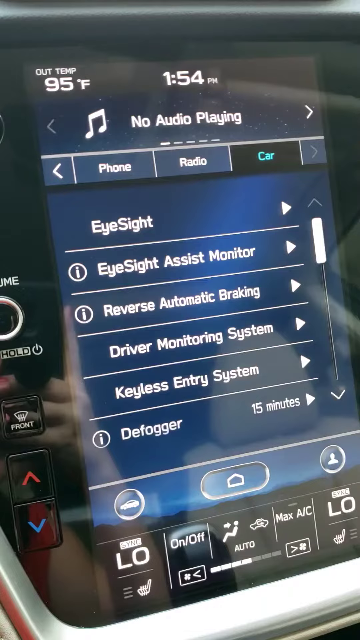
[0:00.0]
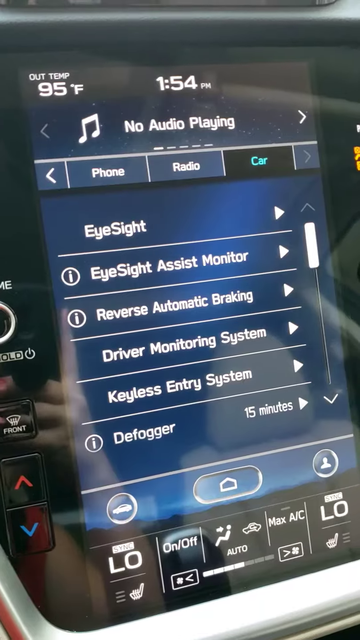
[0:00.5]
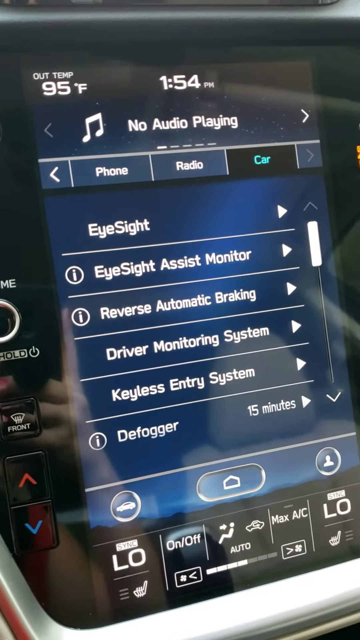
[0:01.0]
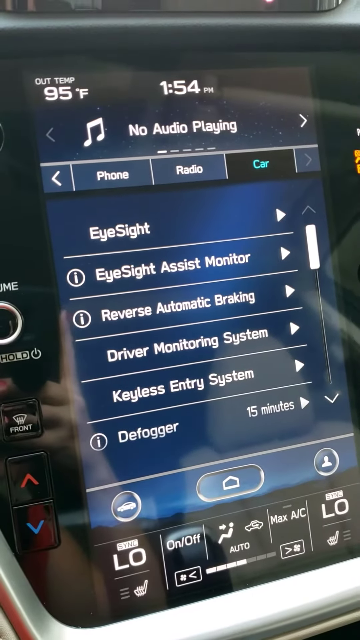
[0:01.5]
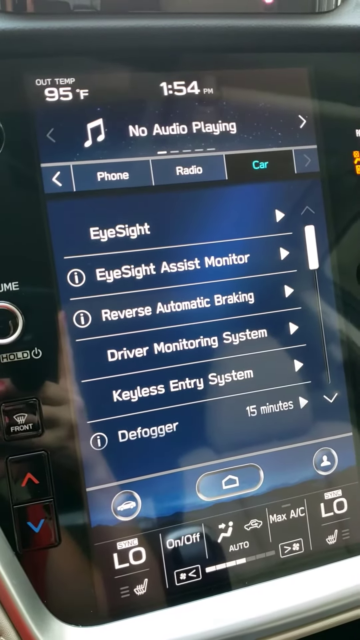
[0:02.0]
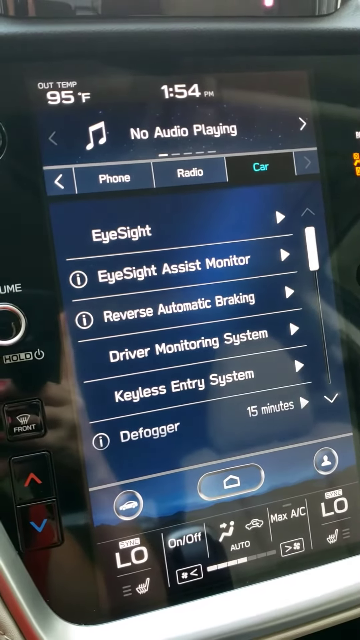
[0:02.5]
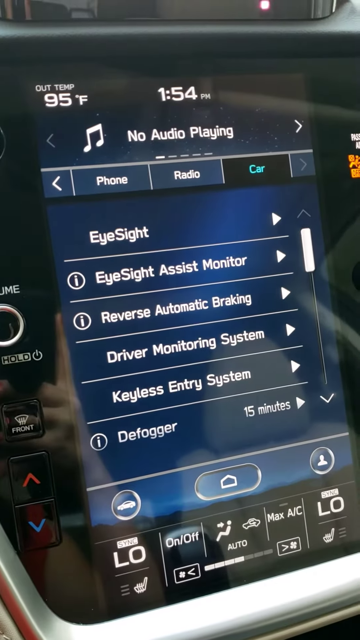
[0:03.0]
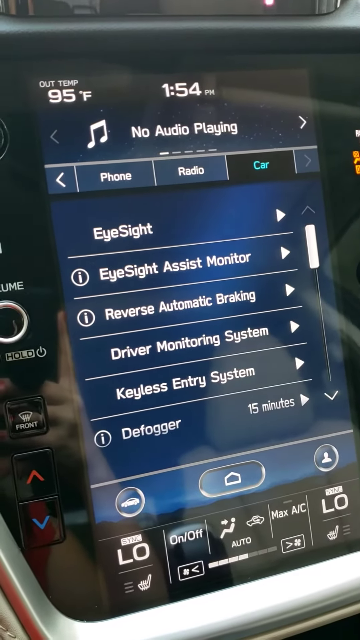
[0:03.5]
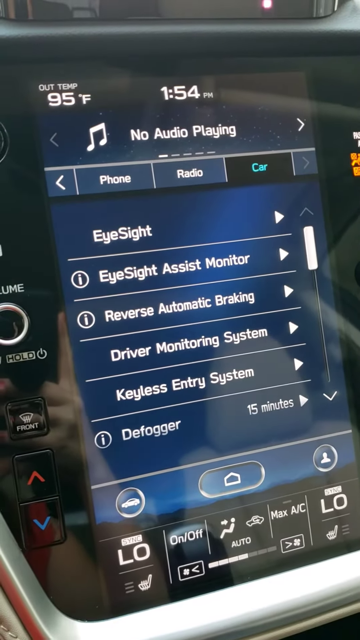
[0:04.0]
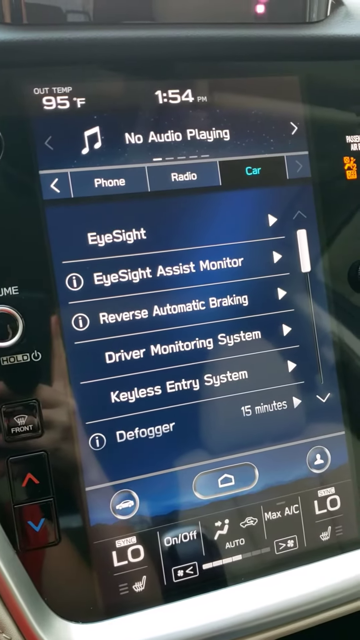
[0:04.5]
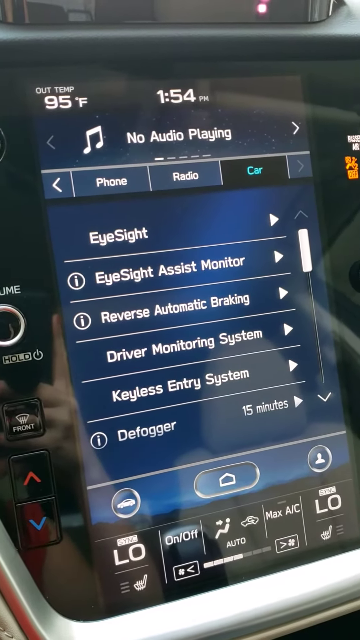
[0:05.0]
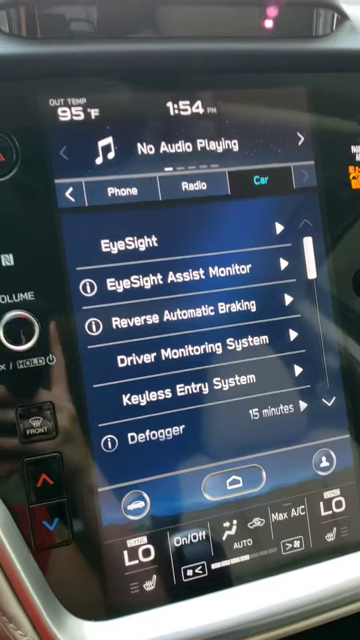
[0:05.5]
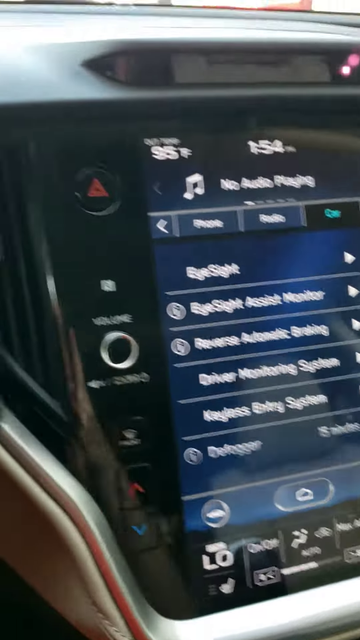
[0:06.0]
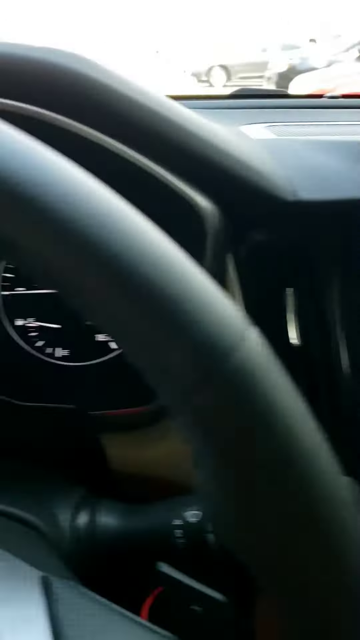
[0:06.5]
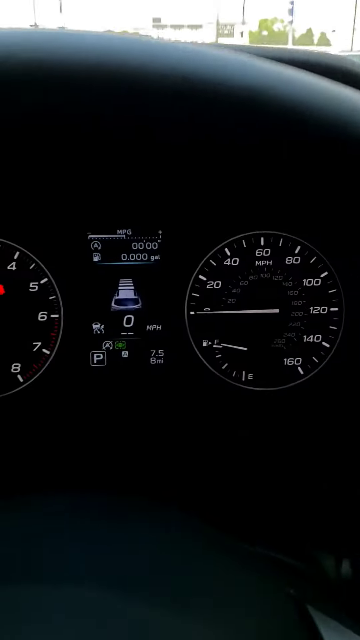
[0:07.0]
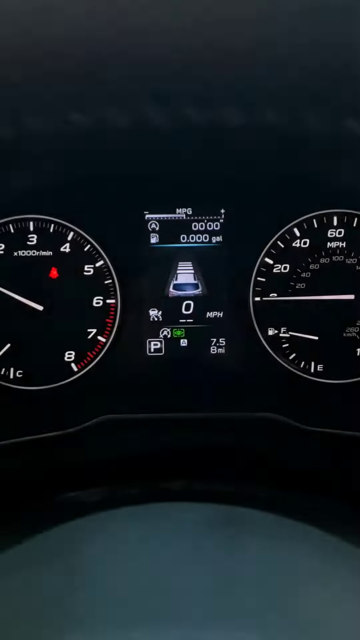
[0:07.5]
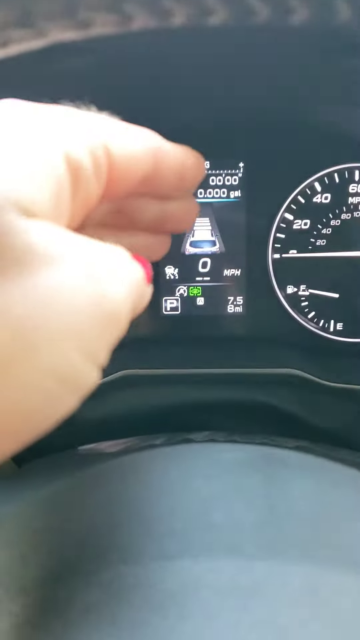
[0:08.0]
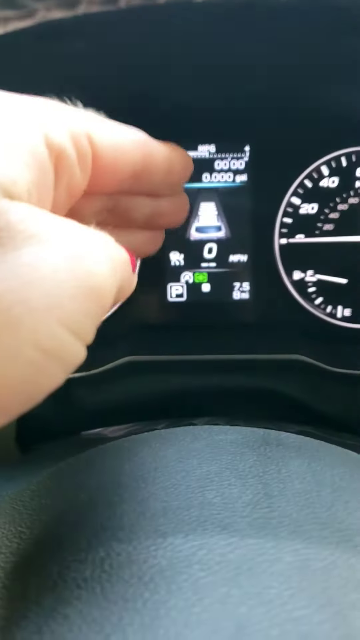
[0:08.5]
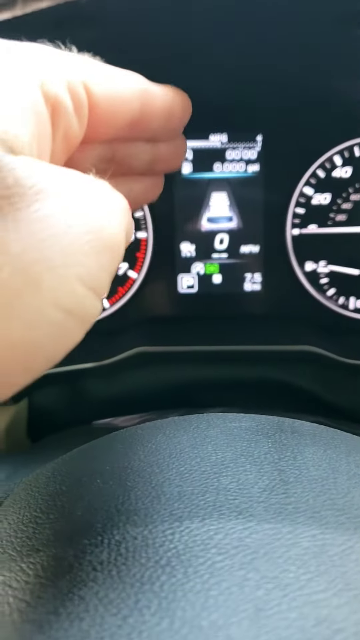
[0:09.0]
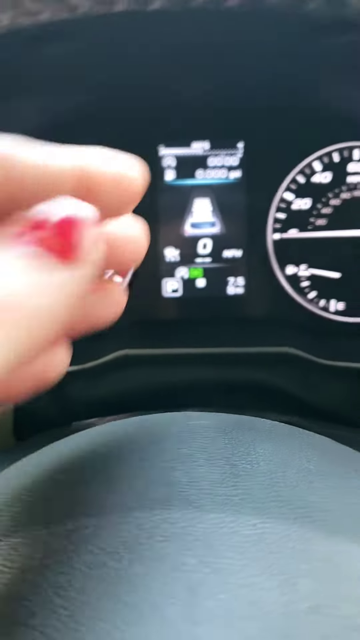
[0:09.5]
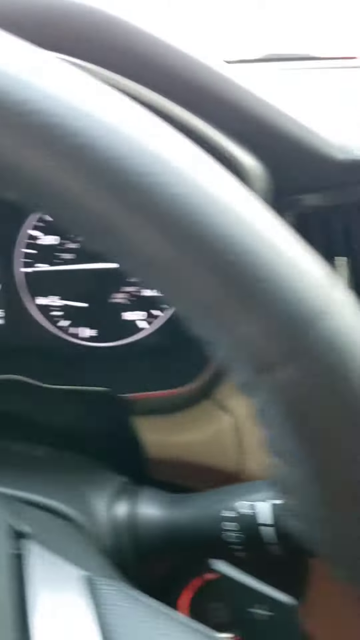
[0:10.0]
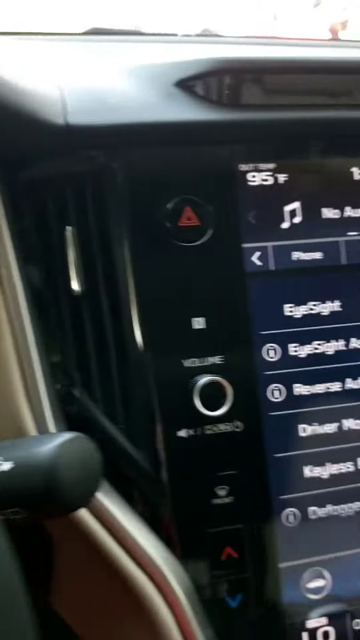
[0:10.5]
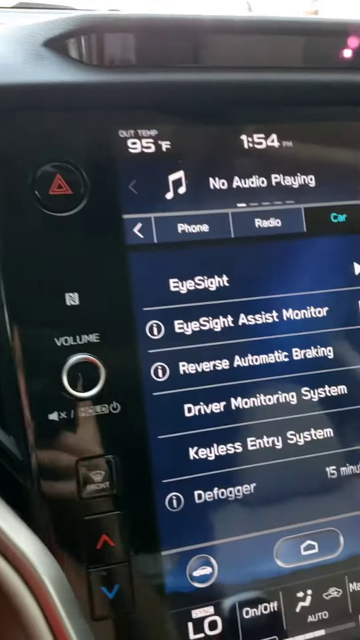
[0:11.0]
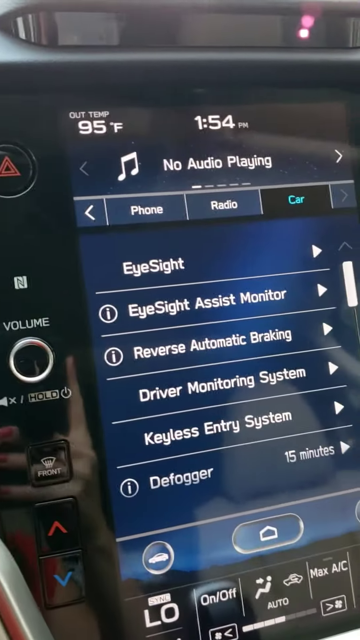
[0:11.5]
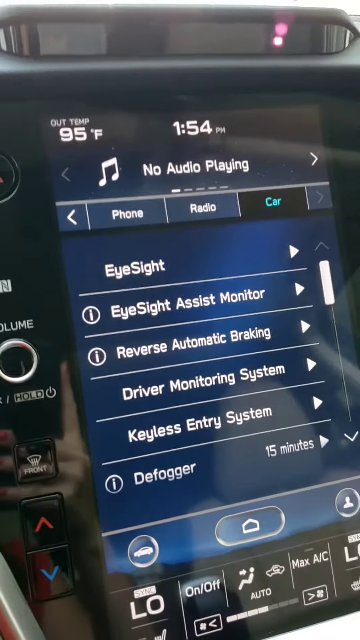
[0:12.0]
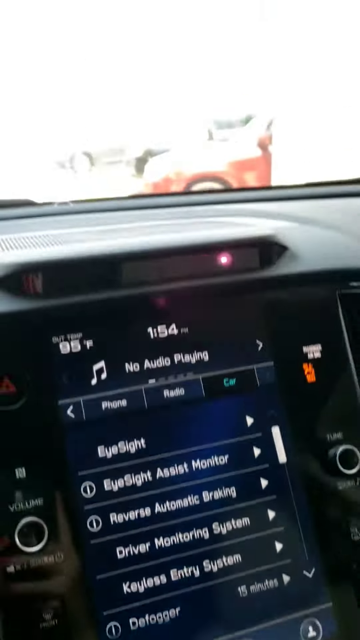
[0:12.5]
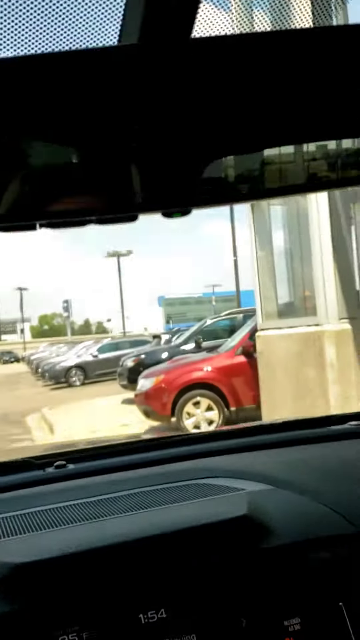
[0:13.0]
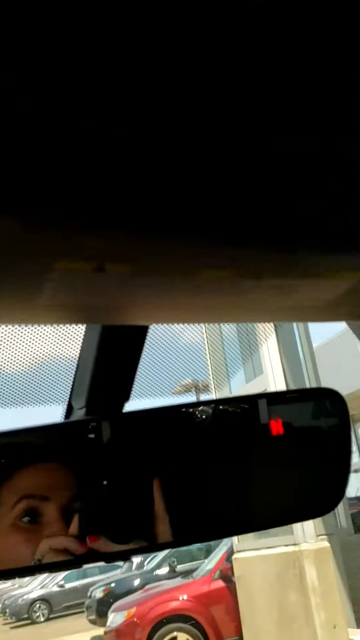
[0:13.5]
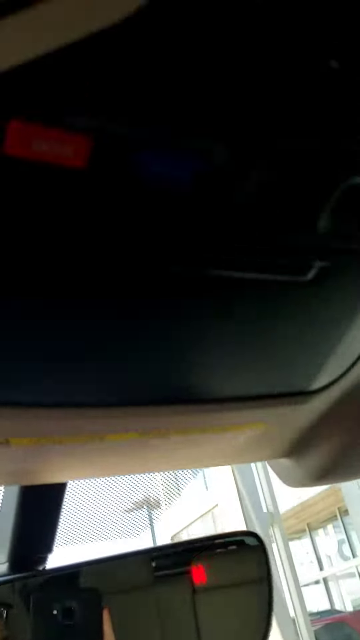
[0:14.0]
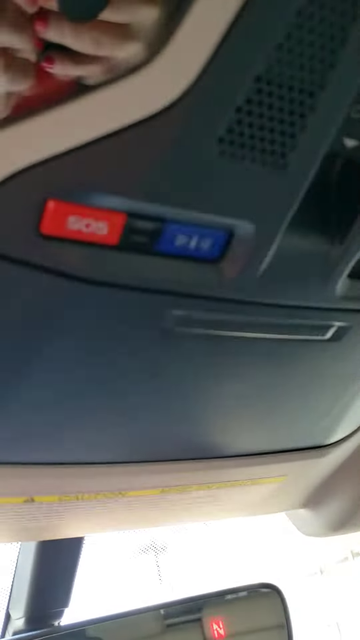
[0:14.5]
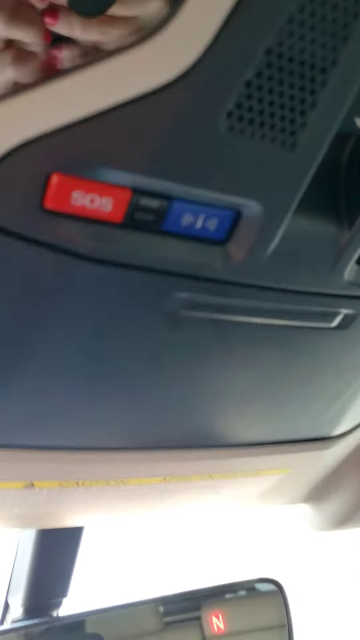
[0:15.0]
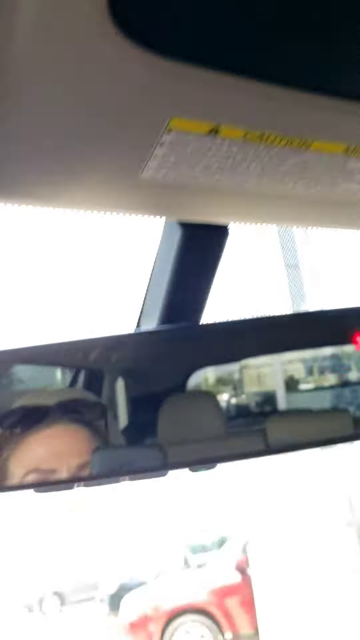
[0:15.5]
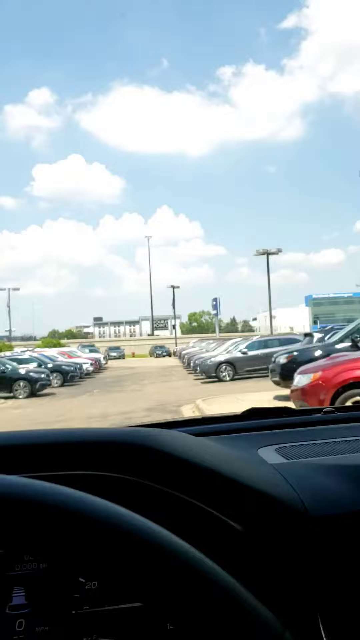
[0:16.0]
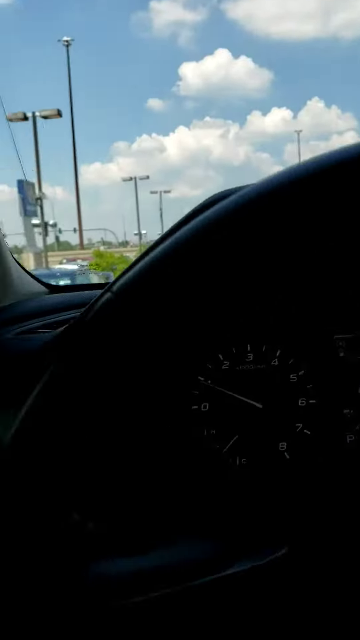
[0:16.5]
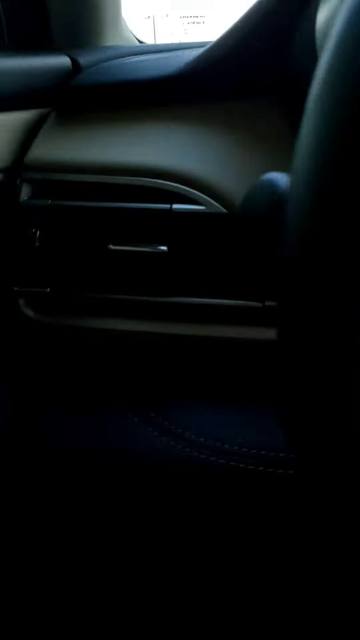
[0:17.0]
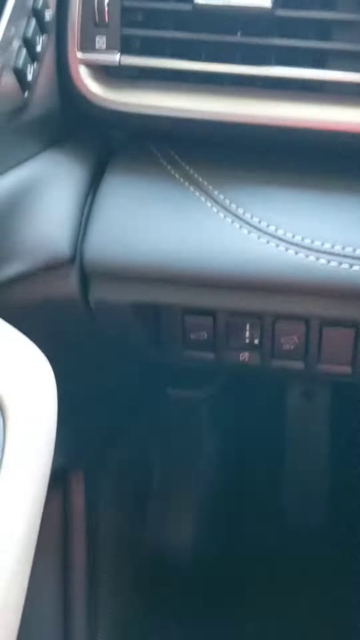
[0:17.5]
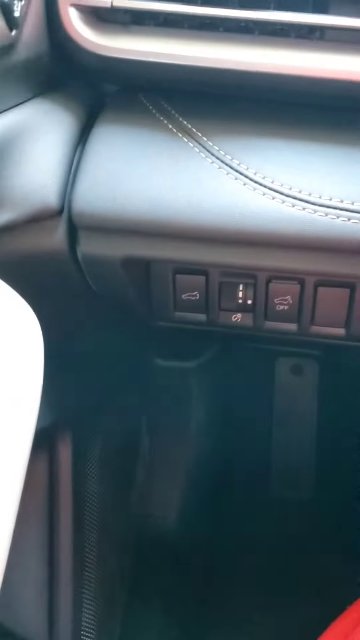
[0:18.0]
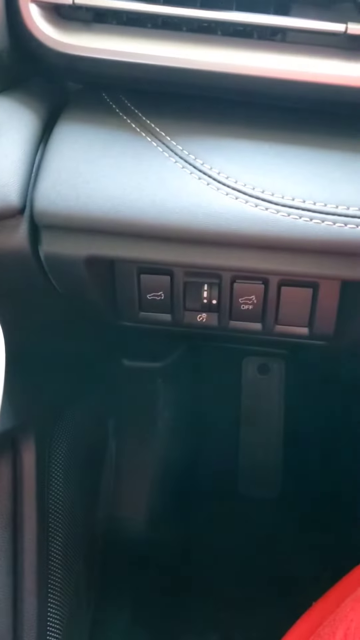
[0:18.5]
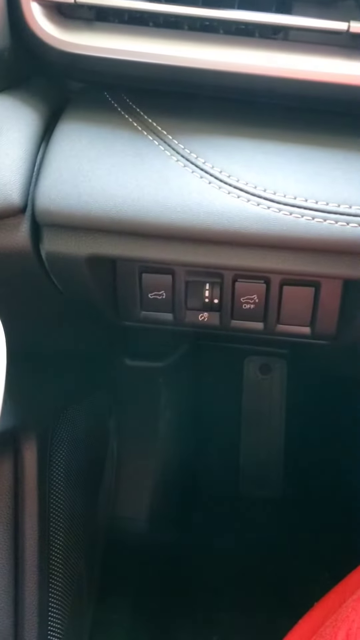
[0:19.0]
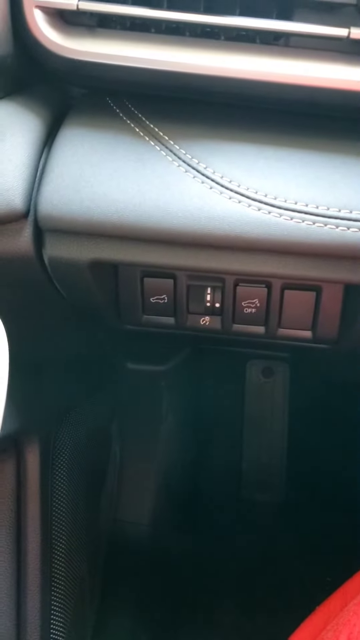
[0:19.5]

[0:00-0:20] A screen displays the text "no audio playing," and it appears to be a screen in a car, as the car's dashboard comes into view and a woman's hand points to the dashboard. The view returns to the original screen, and her reflection is visible in the rearview mirror. She wears red nail polish. The car's buttons are shown, and the screen reads "eyesight" and "eyesight assistant monitor," listing the various eyesight assistance options. The camera moves up to some buttons on the roof of the car, apparently at about the top of the windshield, and she seems to be pointing to the part of the dashboard that controls the eyesight options.